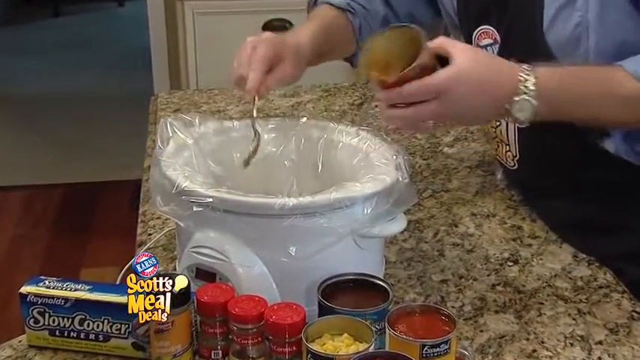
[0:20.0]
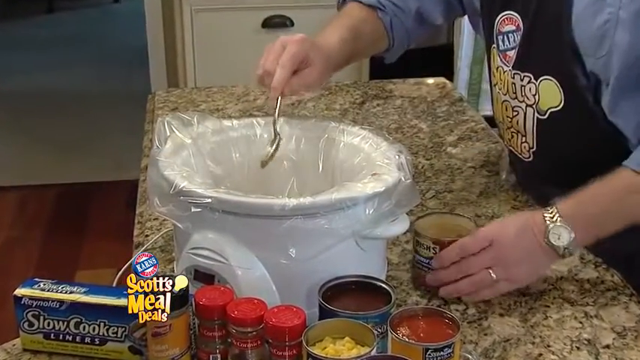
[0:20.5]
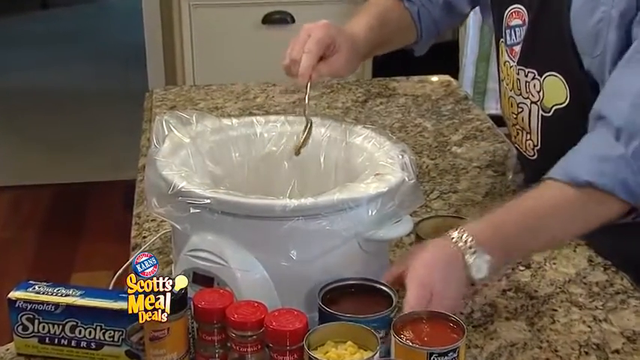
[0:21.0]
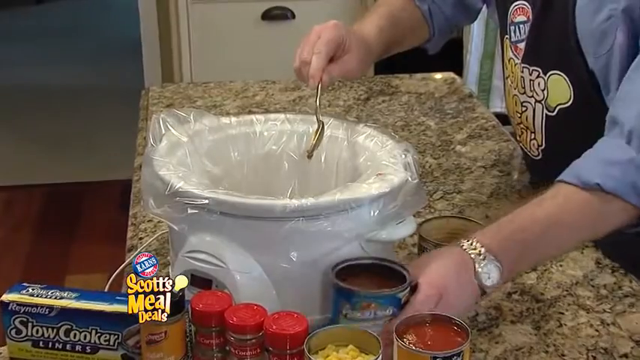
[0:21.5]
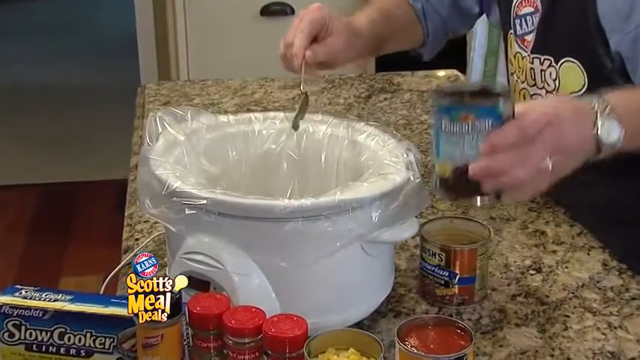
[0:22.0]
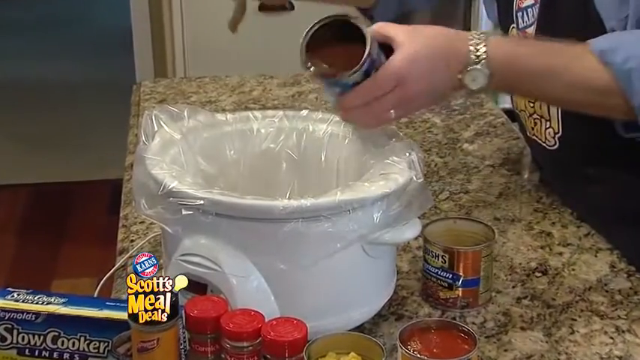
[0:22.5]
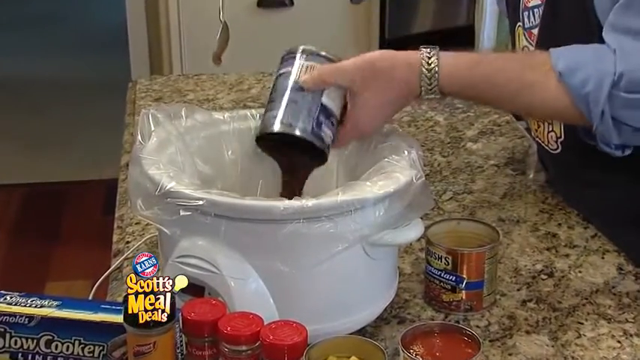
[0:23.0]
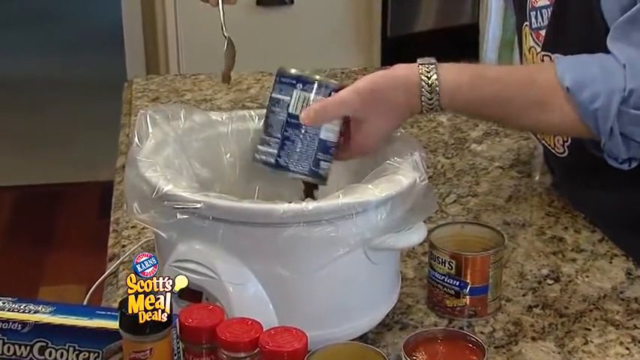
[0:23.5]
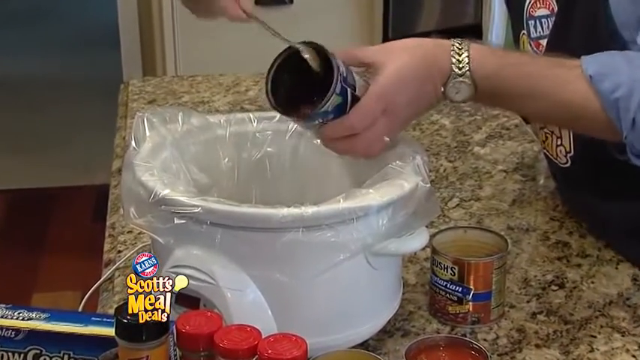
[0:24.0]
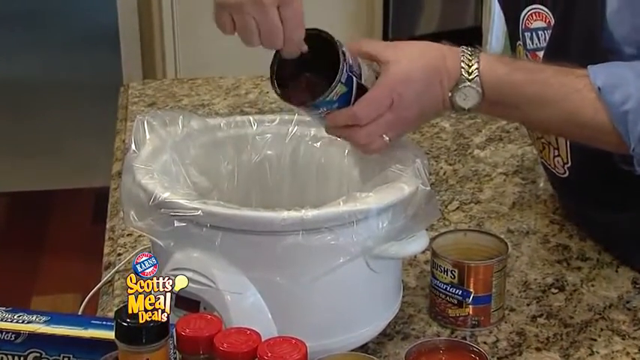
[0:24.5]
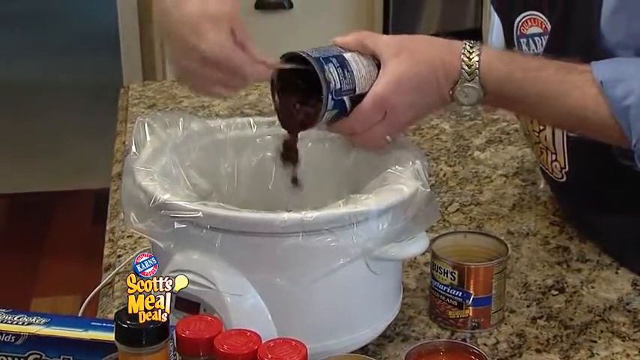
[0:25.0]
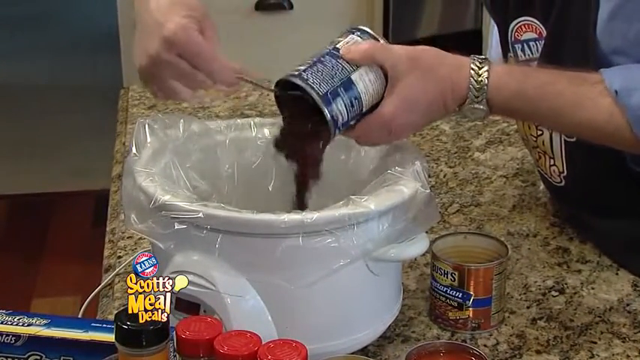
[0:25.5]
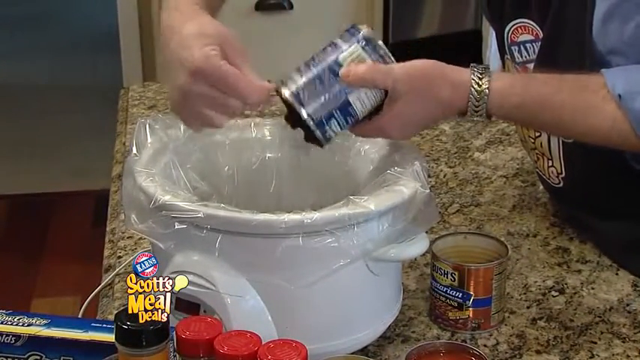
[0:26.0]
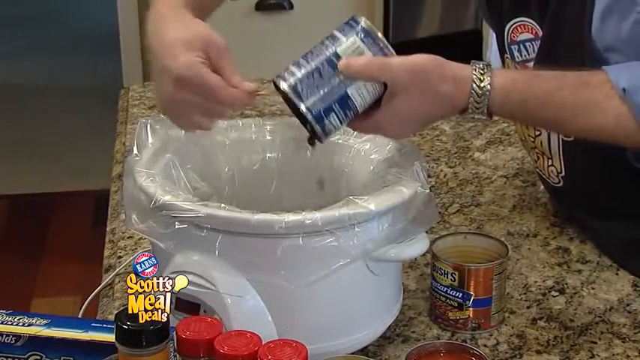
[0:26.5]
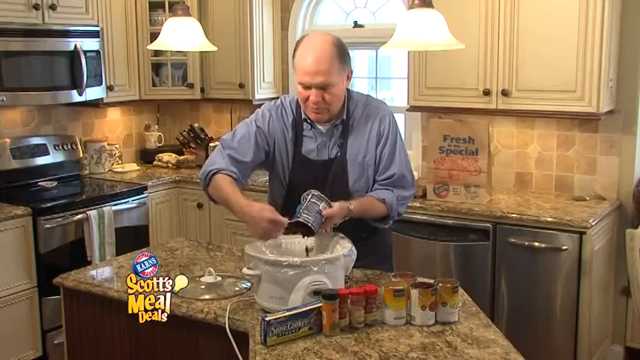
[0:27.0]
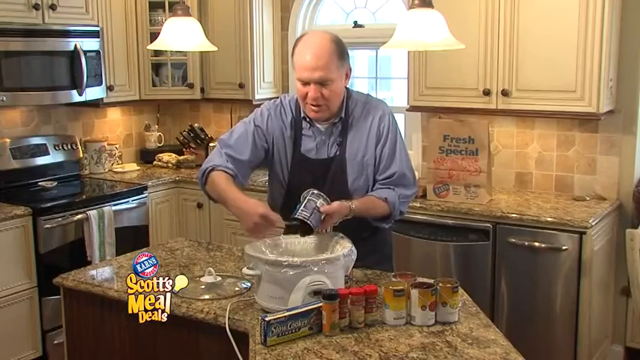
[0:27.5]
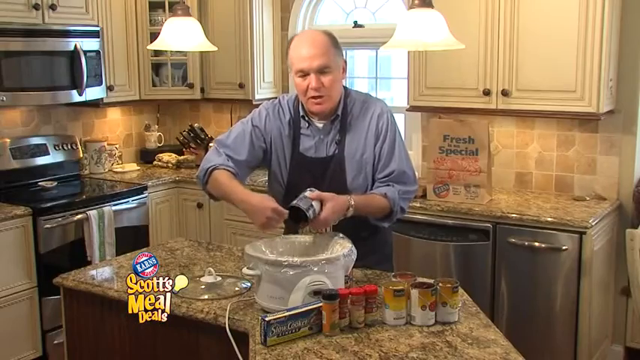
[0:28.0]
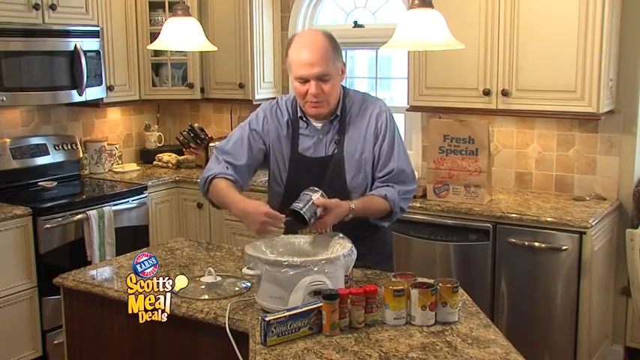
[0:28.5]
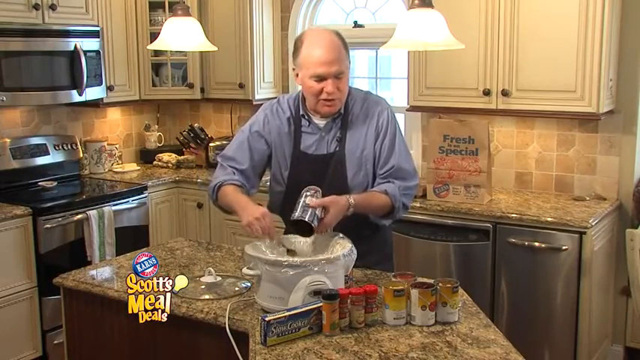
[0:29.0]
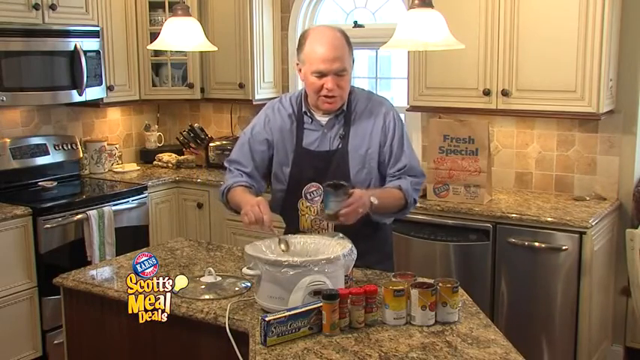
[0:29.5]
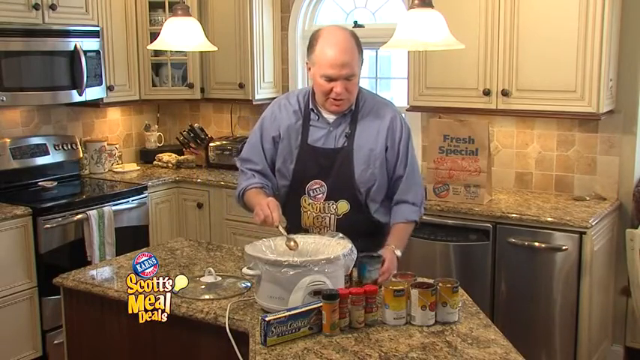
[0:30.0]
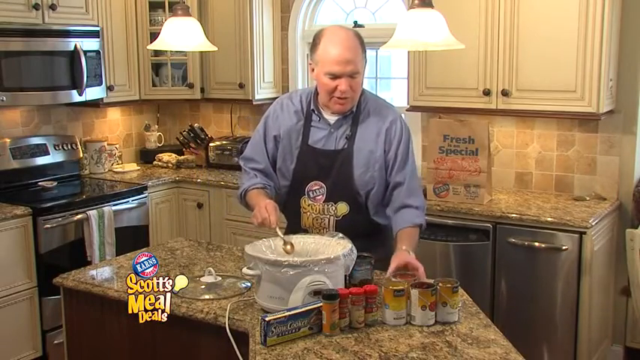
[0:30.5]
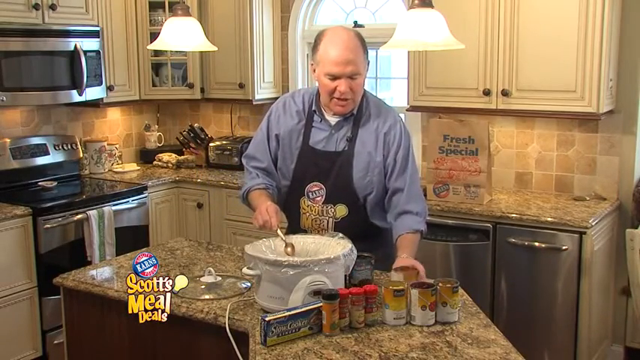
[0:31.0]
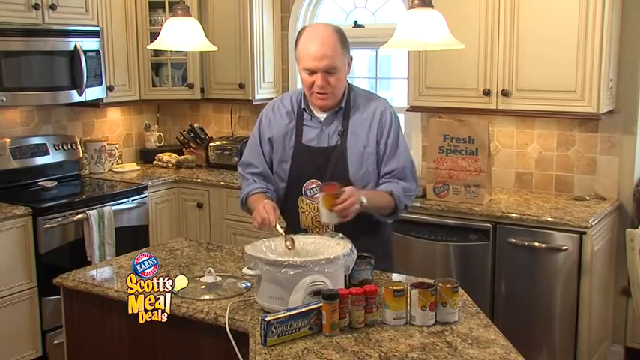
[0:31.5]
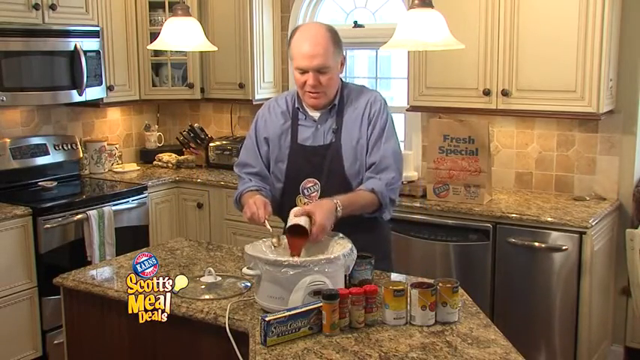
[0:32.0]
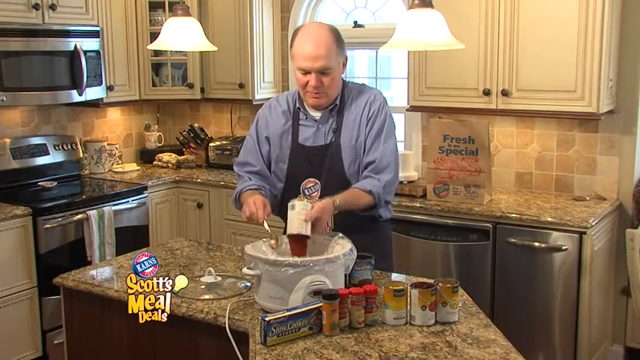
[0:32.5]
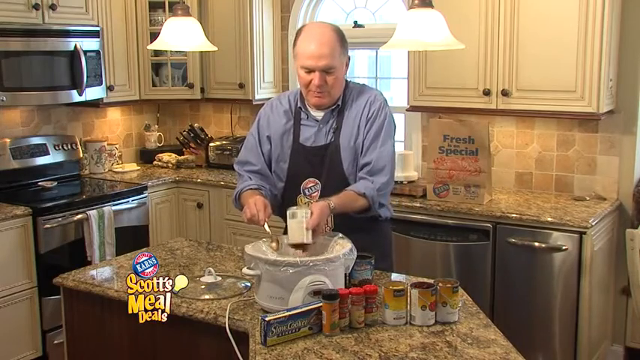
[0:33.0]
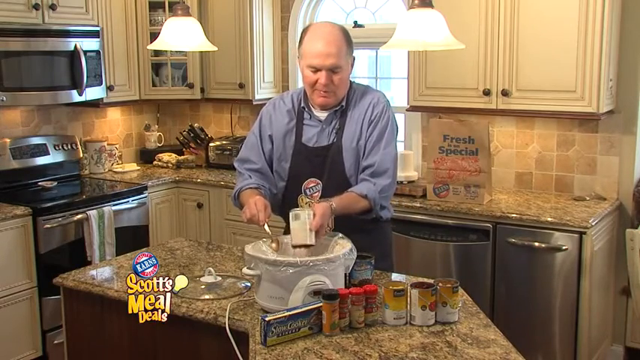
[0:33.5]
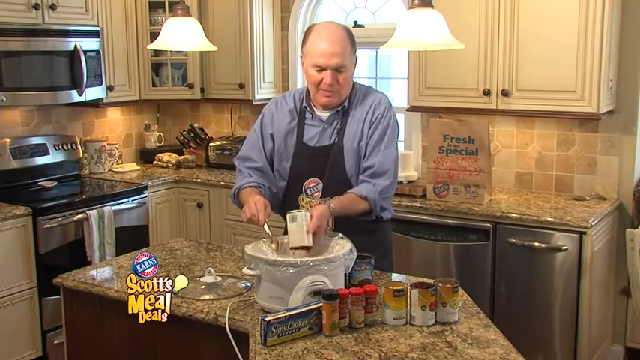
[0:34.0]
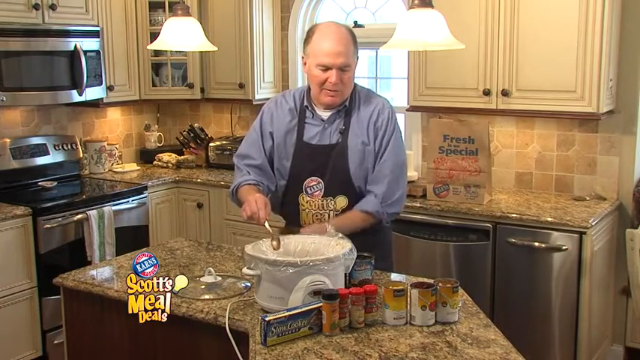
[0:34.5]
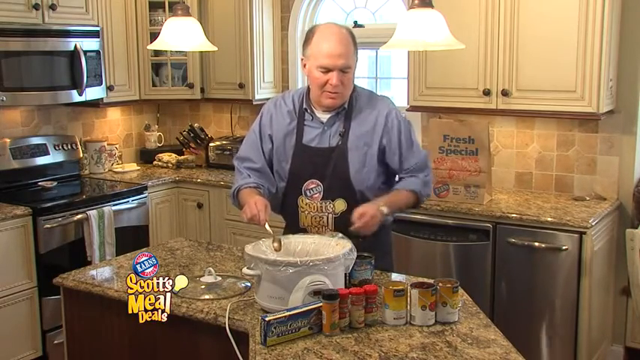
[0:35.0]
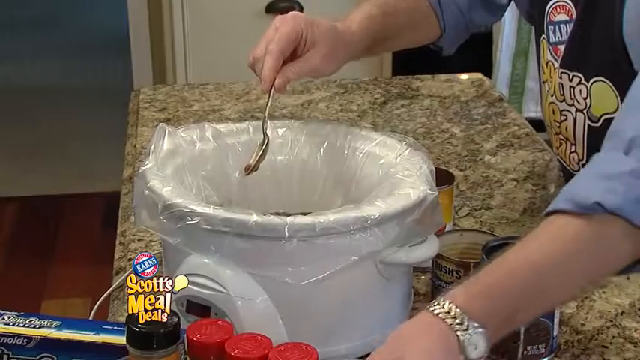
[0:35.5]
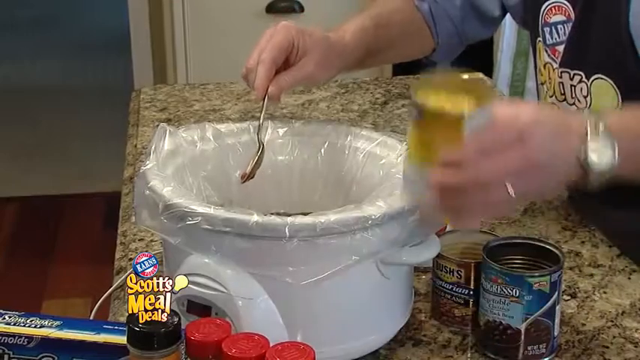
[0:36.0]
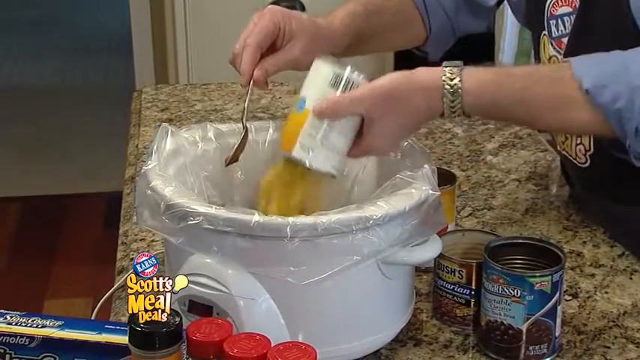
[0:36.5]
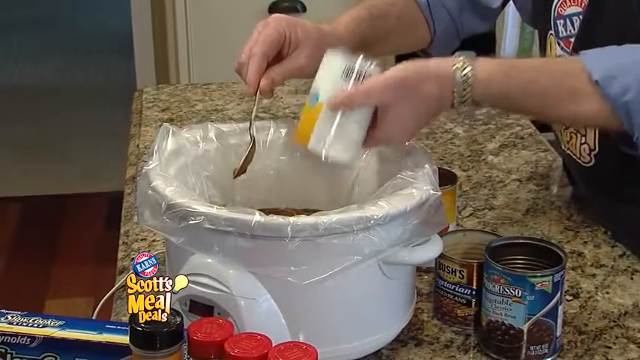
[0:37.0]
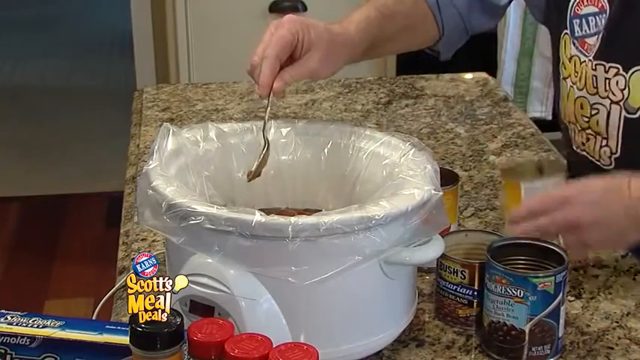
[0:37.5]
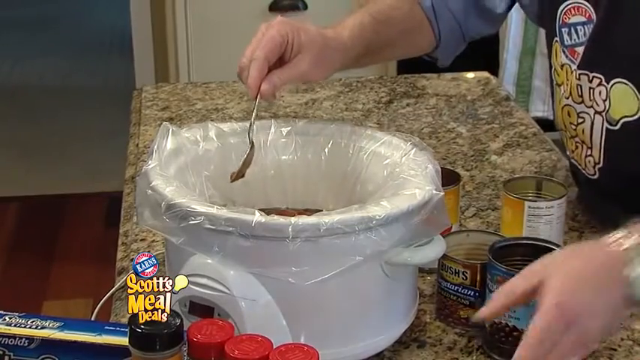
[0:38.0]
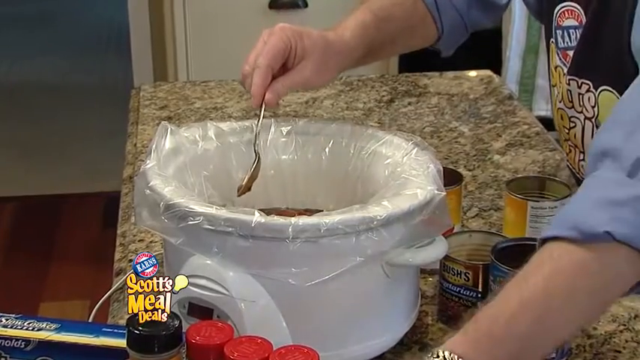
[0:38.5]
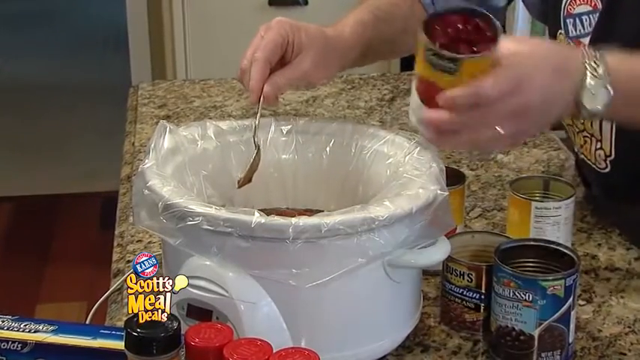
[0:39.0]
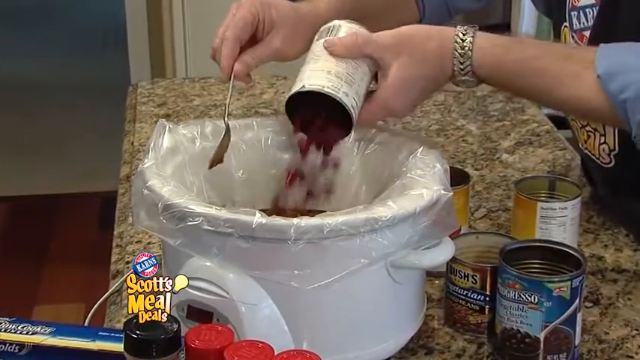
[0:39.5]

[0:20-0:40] After dumping the baked beans into the slow cooker, the man grabs a can of black beans that appear to contain a lot of liquid and dumps all of it into the slow cooker with the Bush's Heinz baked beans. He uses a spoon to scrape the excess out of the black bean can; a close-up shows this for a few seconds before the shot returns to normal, with the older man in the middle of the picture. He then grabs another can of a red substance, possibly tomato sauce, and dumps it in, followed by a can of corn, and lastly a can of red beans, letting the contents fall into the slow cooker.